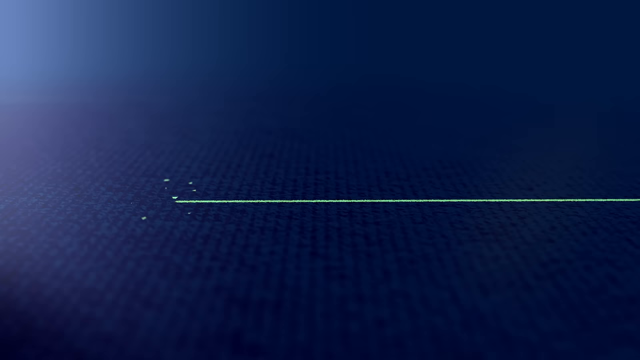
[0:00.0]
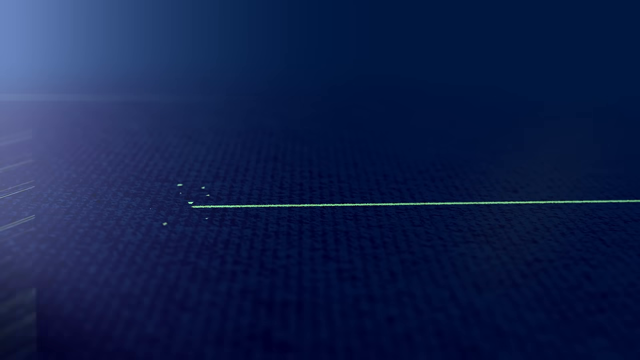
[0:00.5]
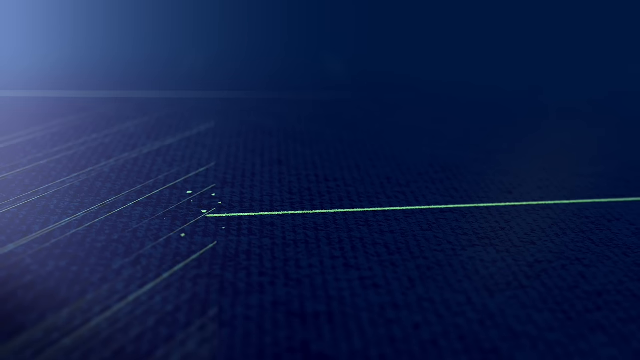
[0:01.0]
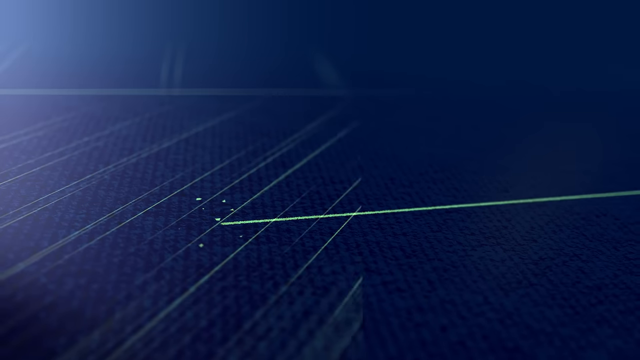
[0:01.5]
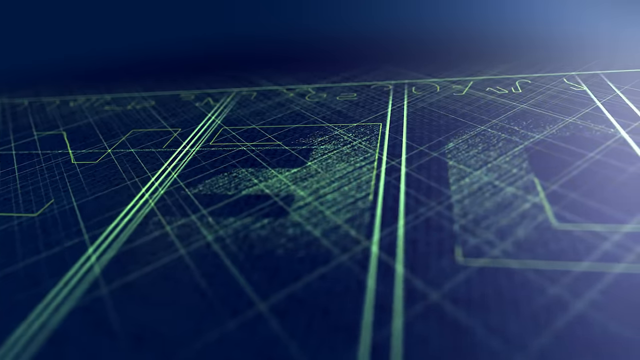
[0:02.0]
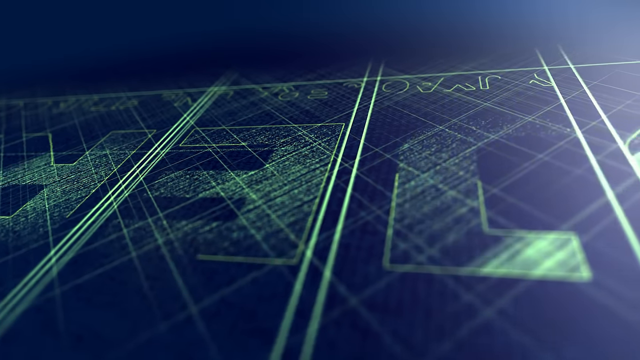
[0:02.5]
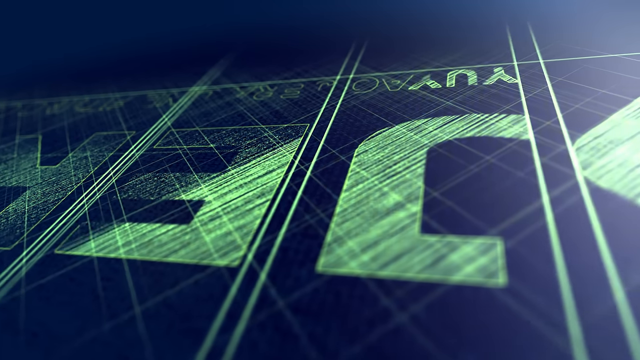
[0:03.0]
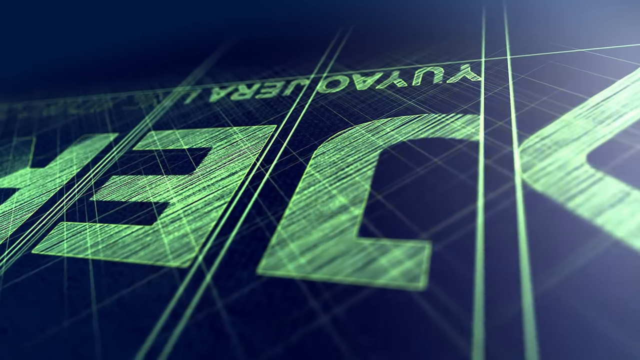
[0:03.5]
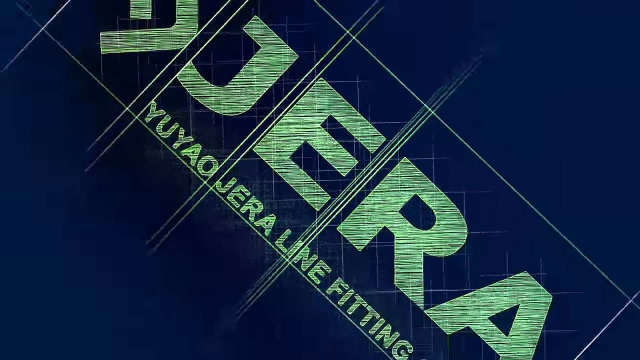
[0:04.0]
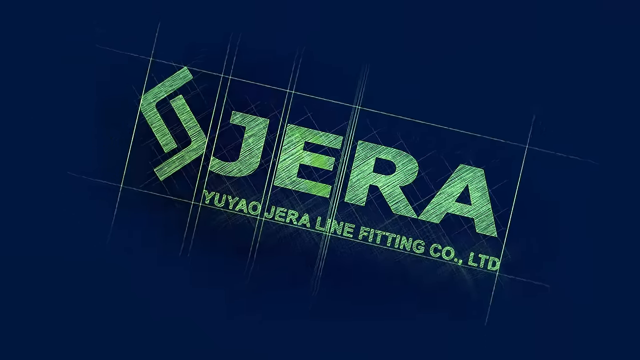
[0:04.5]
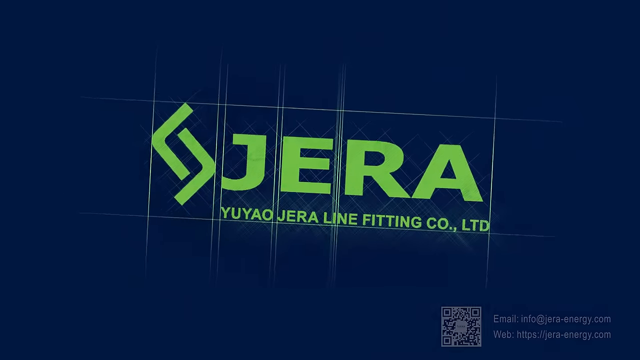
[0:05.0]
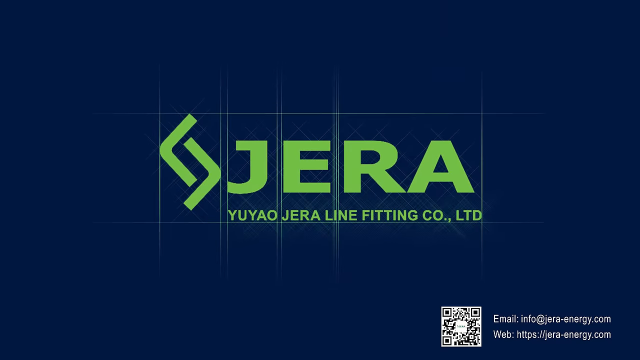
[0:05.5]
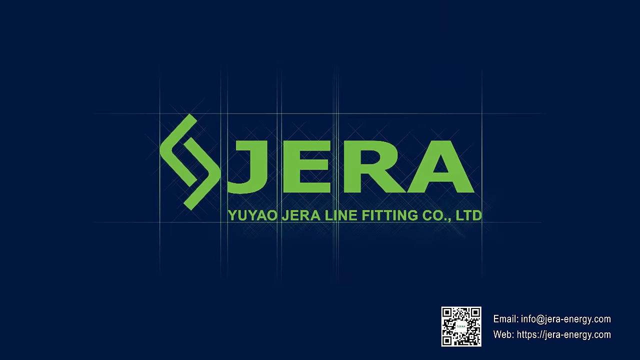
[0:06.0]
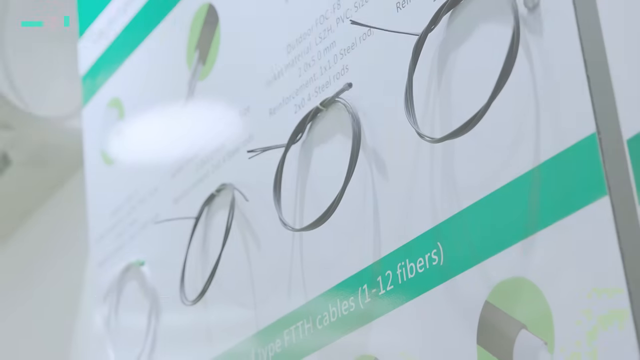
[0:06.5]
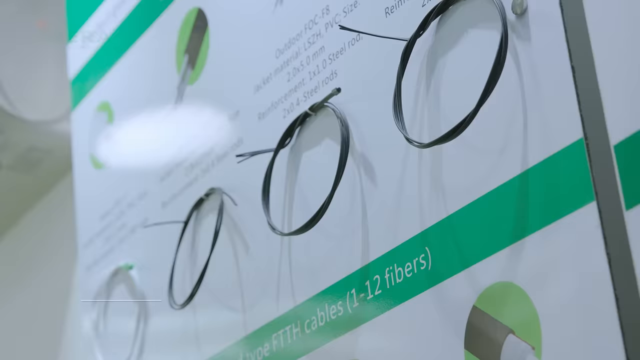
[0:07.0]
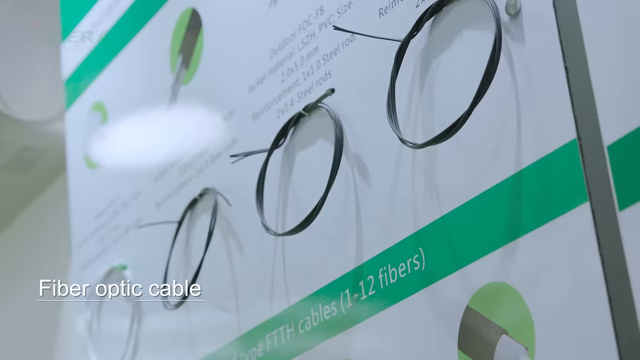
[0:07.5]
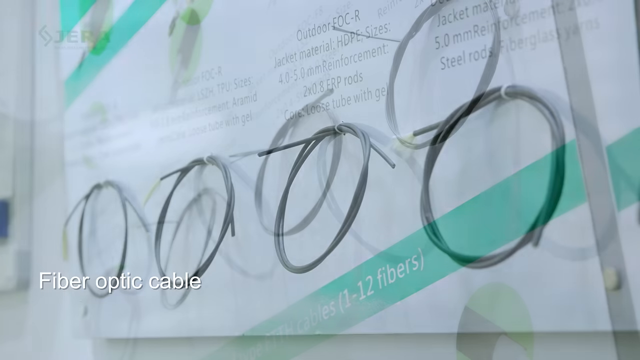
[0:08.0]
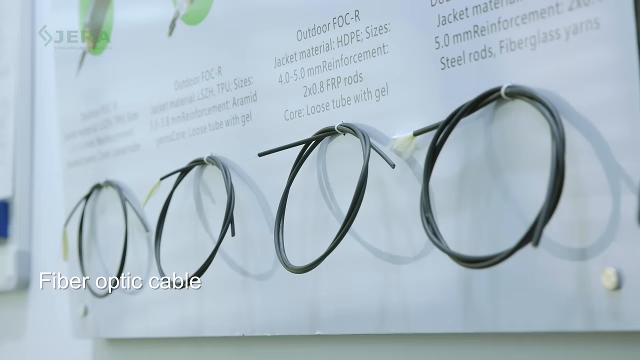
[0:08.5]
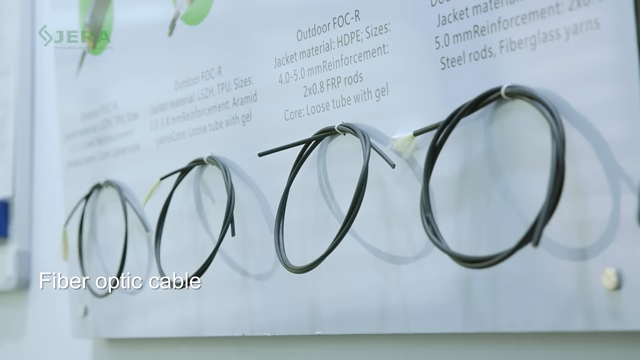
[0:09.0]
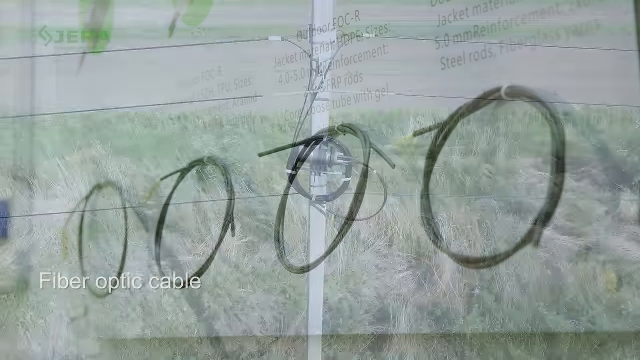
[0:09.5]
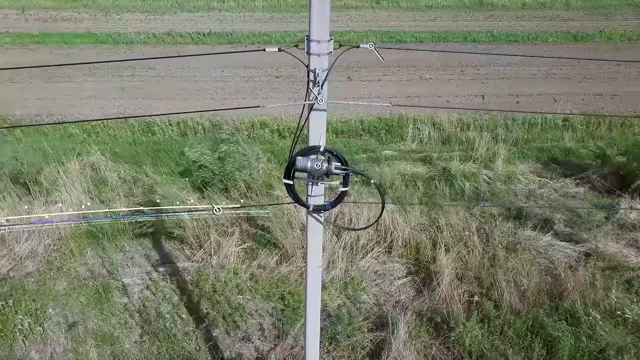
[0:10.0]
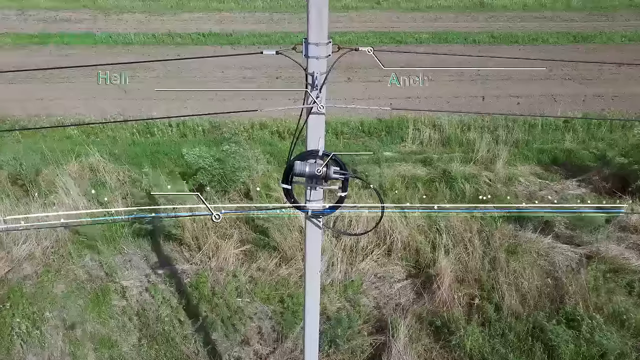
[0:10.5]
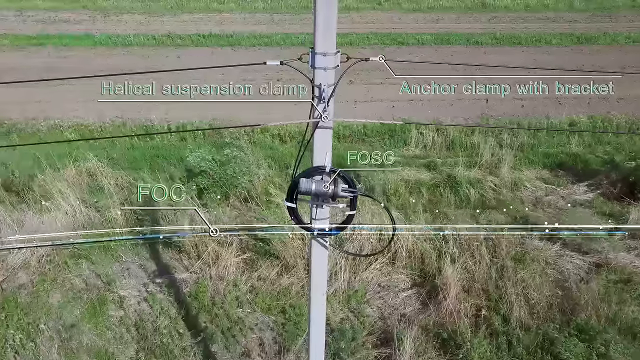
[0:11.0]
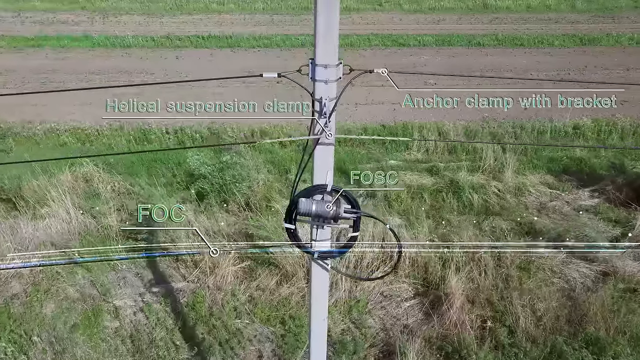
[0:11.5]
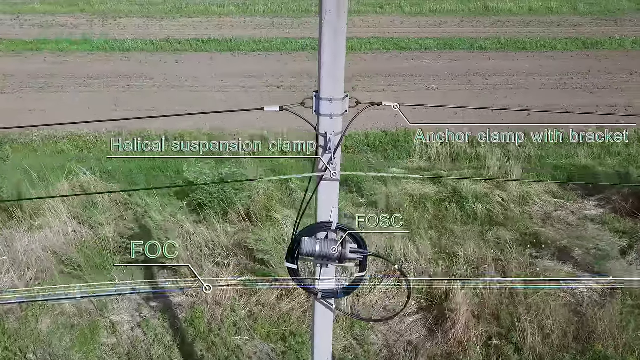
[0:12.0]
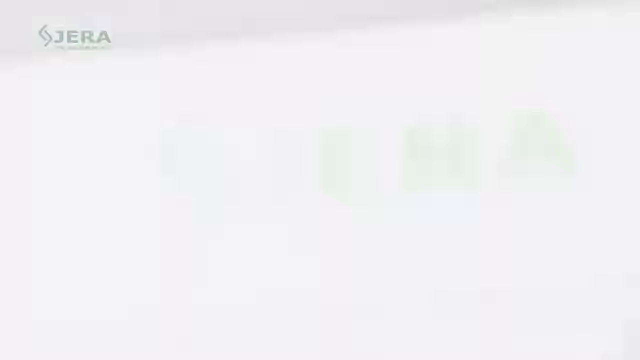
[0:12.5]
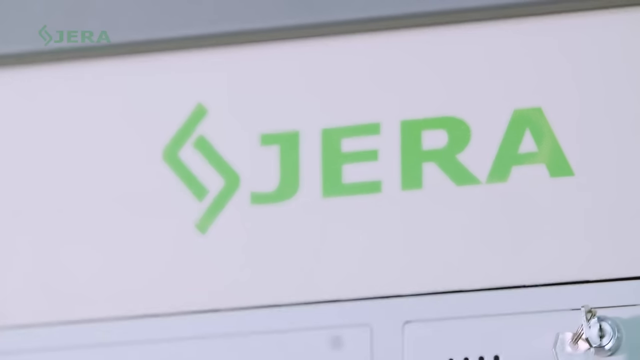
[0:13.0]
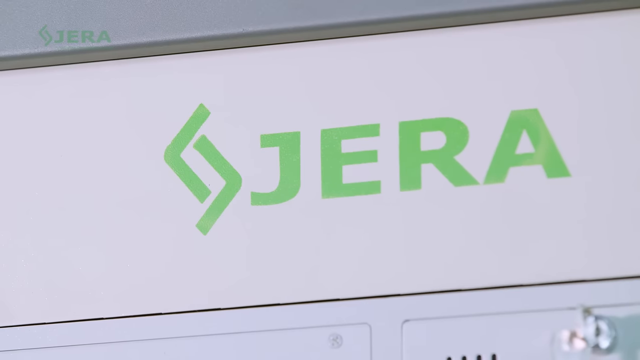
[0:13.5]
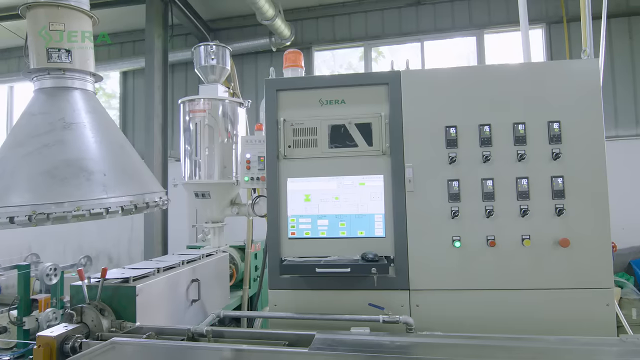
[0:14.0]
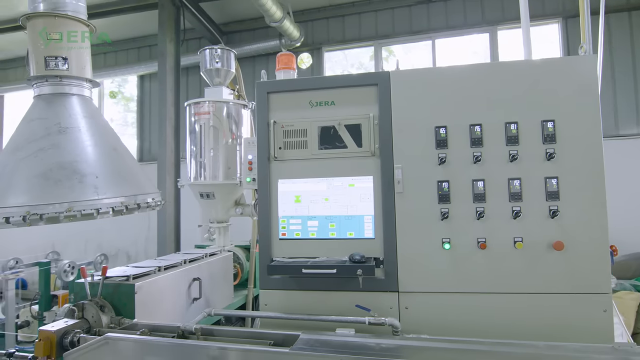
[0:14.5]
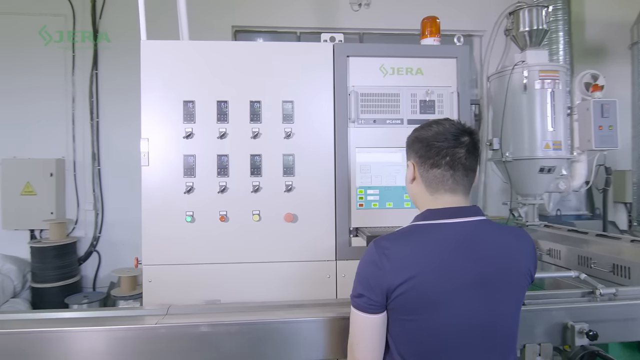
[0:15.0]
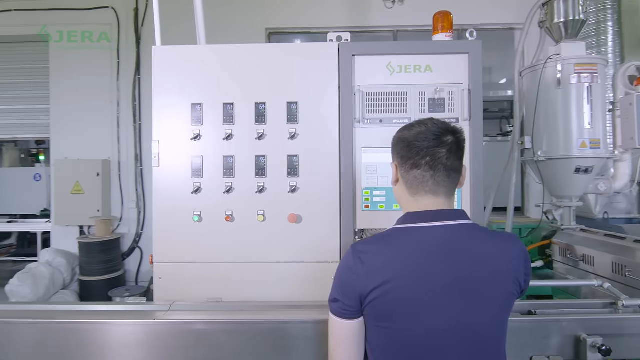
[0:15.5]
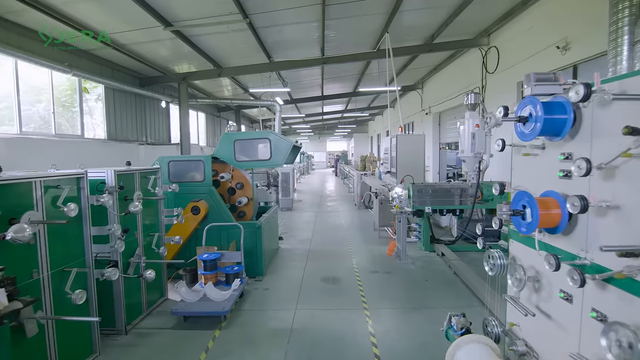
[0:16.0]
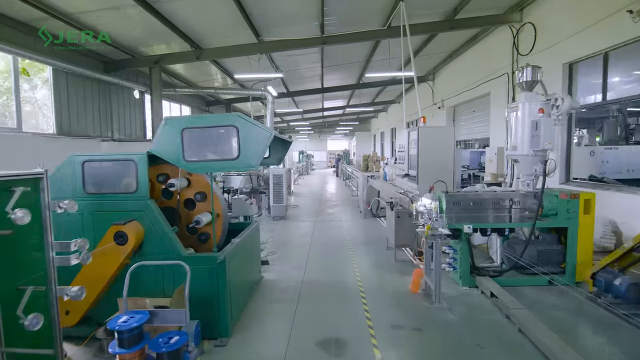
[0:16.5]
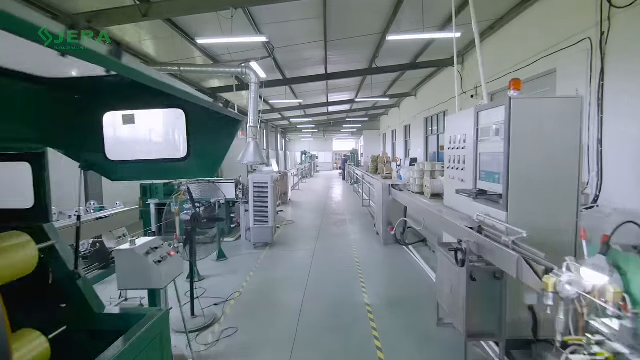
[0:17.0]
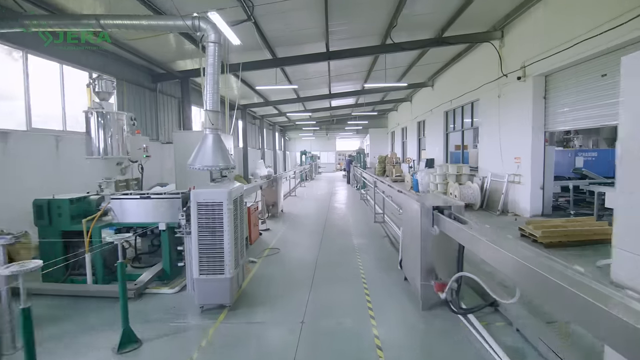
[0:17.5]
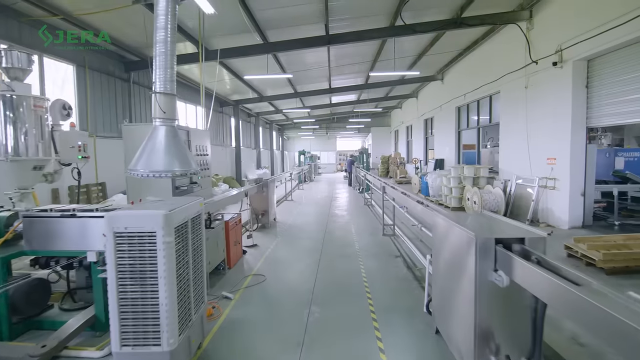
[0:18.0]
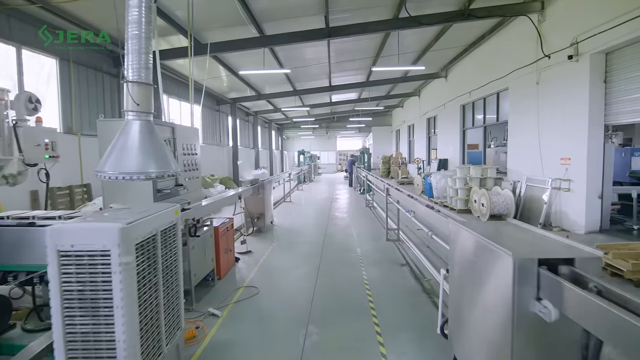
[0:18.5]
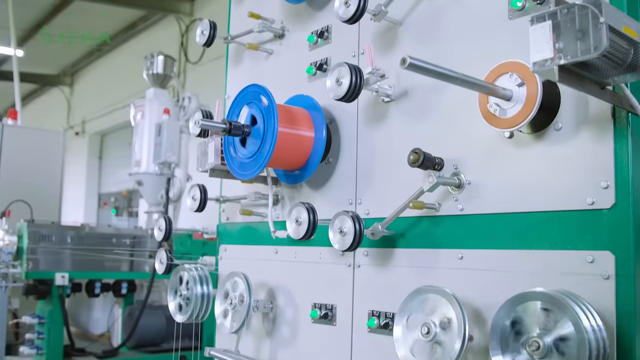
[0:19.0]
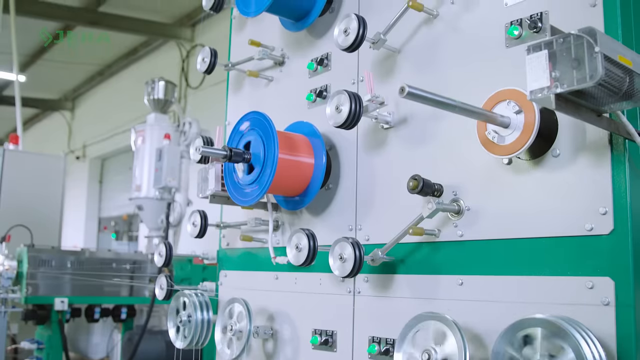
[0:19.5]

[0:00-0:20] The video presents a company named Jarrah, which develops fiber optic cable and infrastructure in a factory for use in other manufacturing processes.